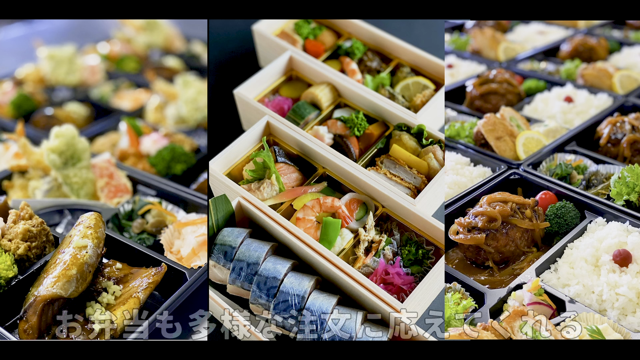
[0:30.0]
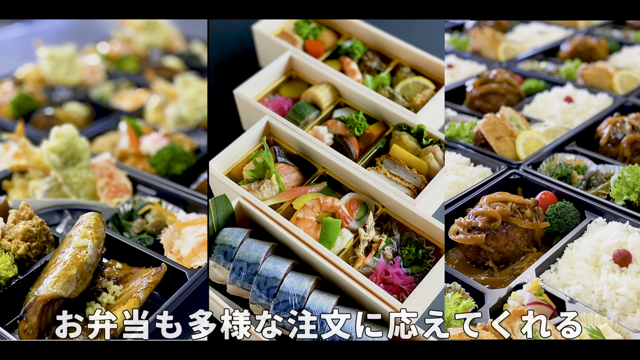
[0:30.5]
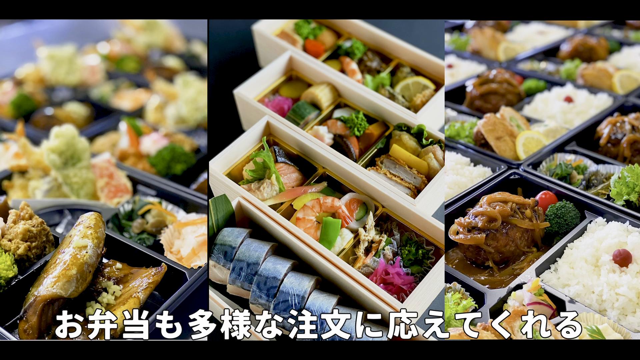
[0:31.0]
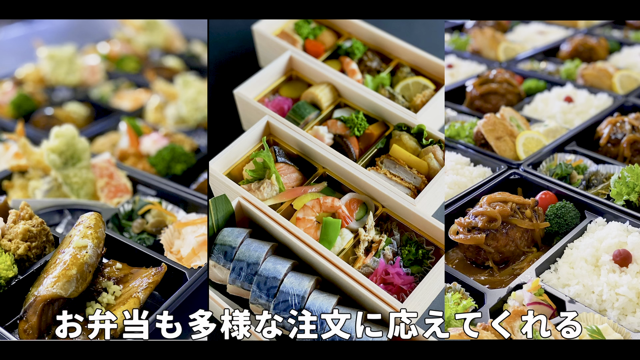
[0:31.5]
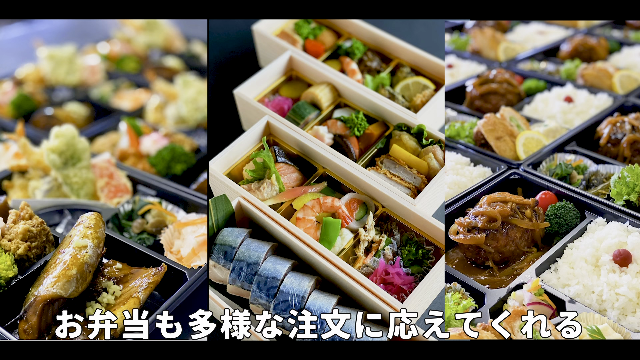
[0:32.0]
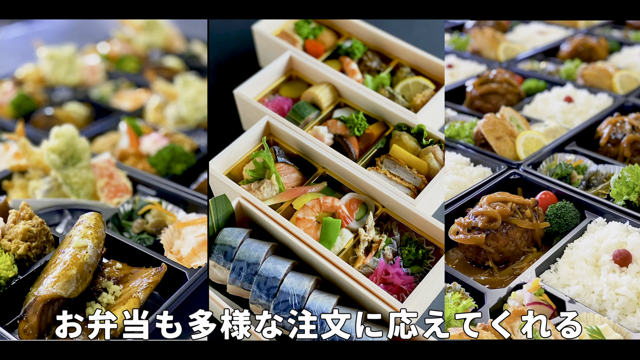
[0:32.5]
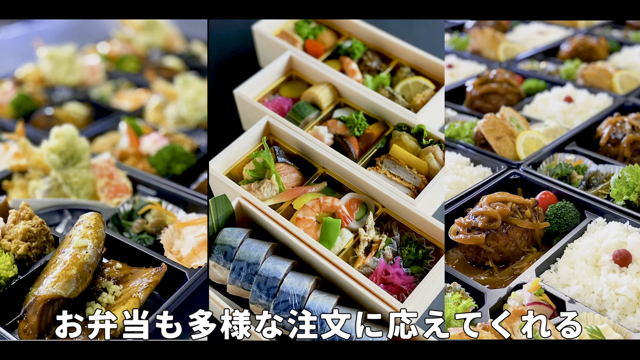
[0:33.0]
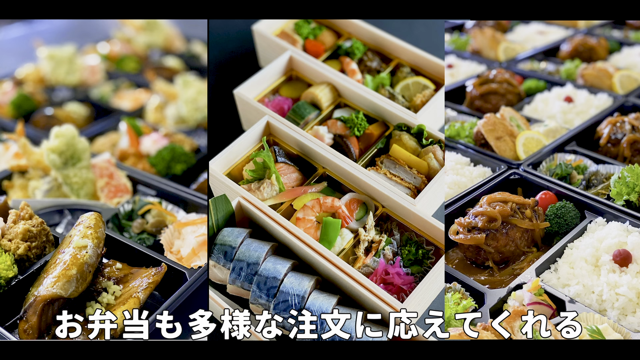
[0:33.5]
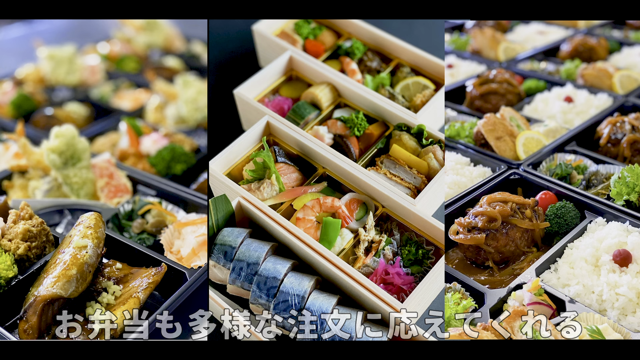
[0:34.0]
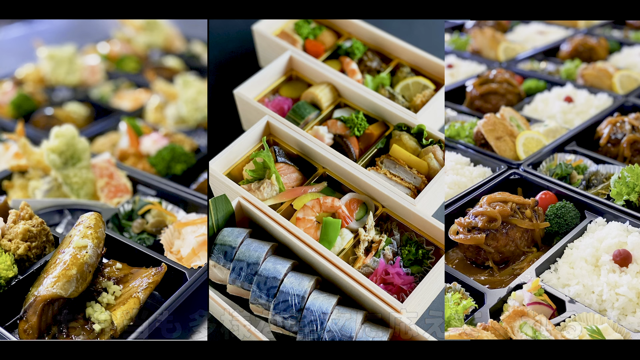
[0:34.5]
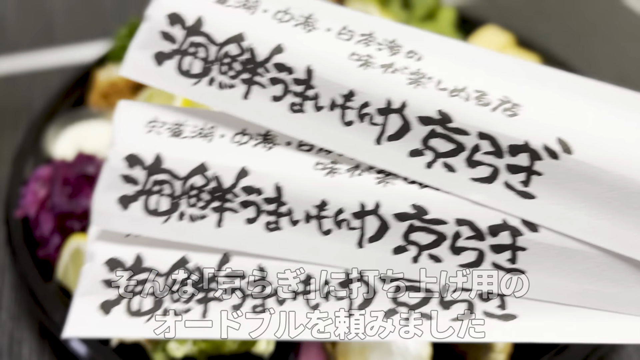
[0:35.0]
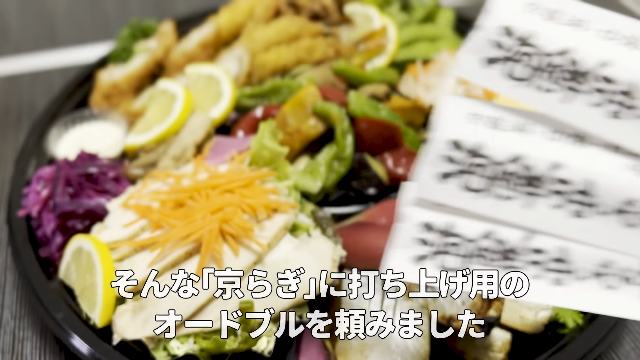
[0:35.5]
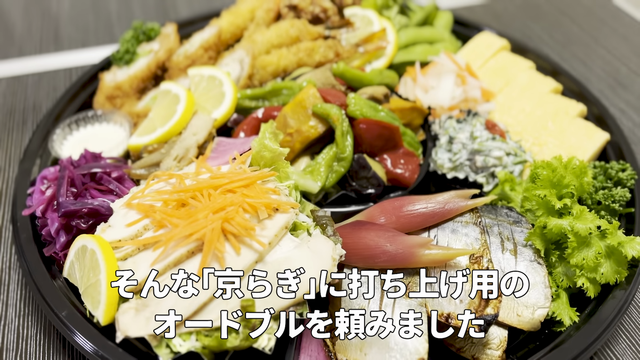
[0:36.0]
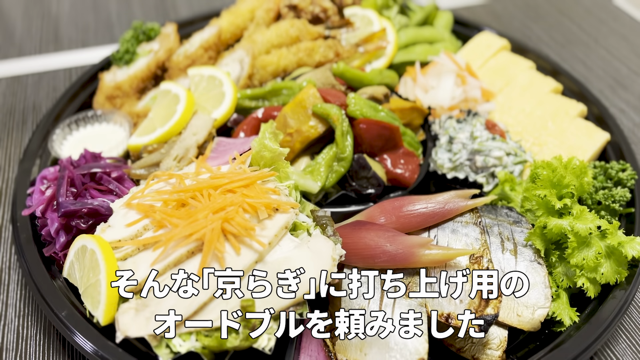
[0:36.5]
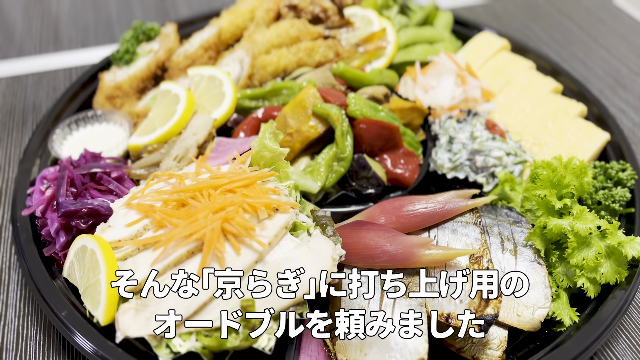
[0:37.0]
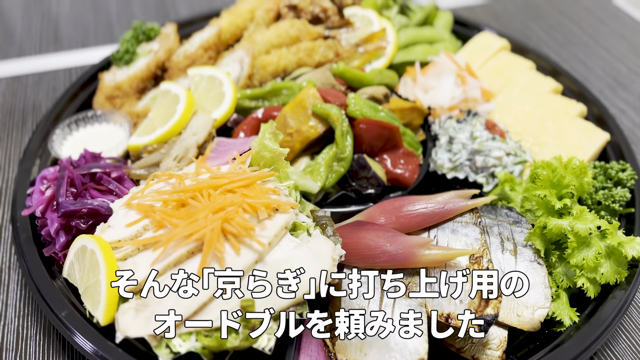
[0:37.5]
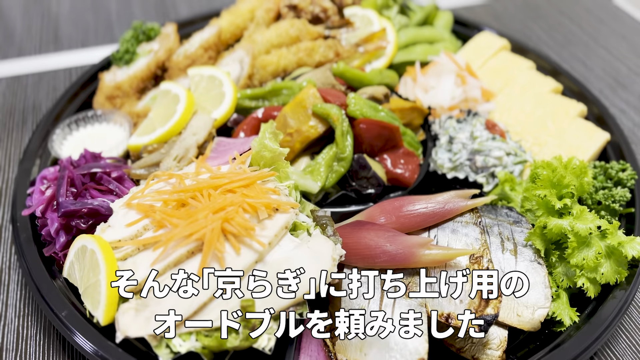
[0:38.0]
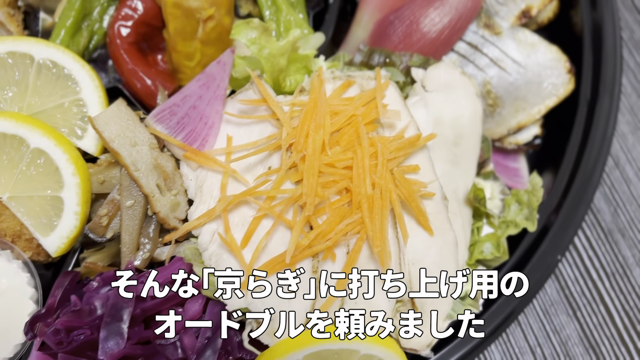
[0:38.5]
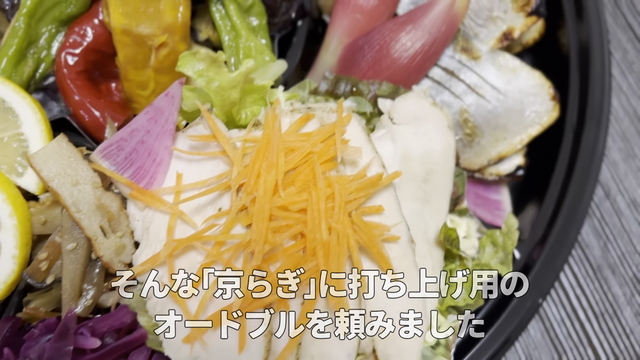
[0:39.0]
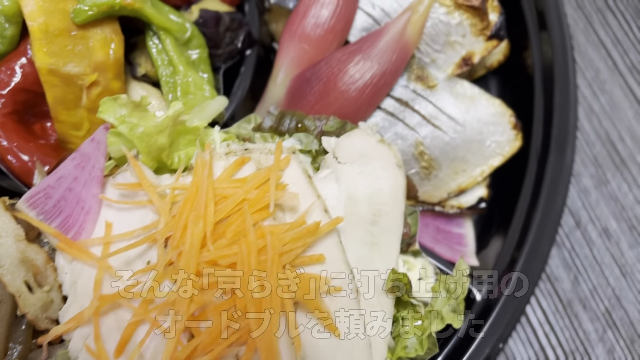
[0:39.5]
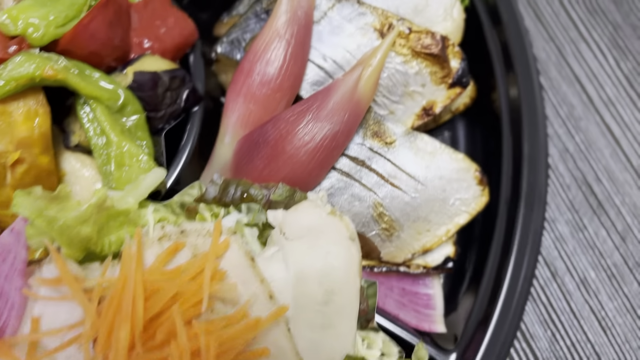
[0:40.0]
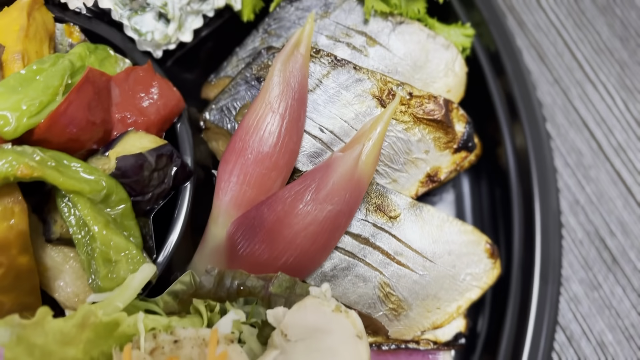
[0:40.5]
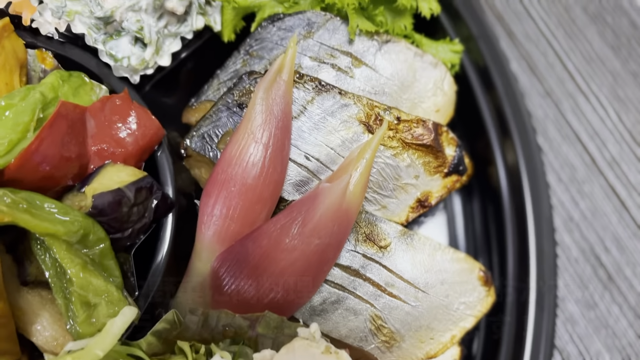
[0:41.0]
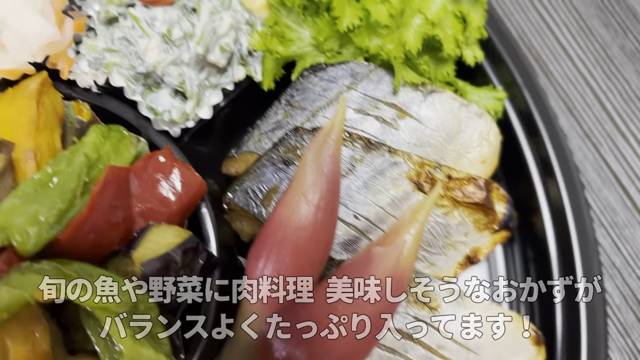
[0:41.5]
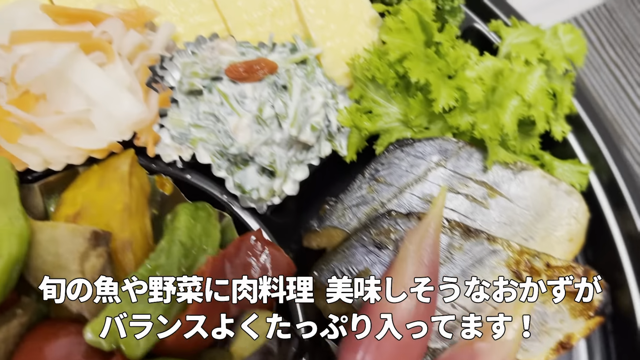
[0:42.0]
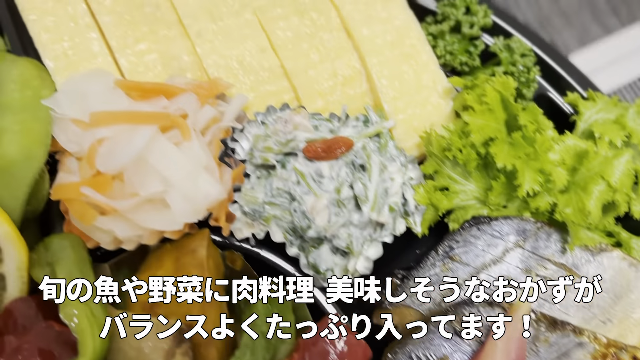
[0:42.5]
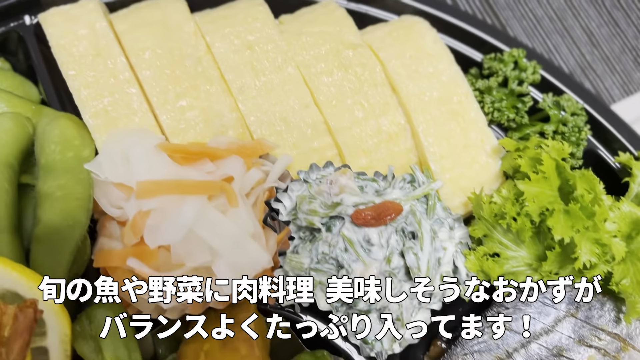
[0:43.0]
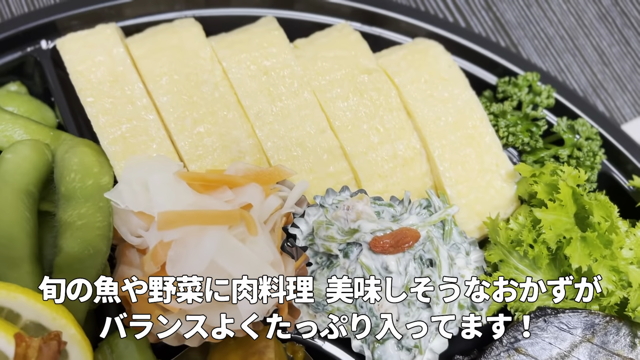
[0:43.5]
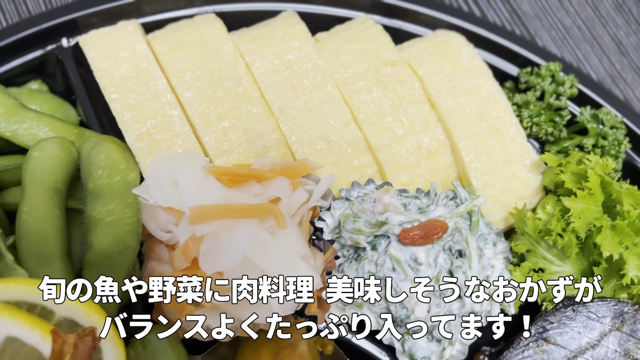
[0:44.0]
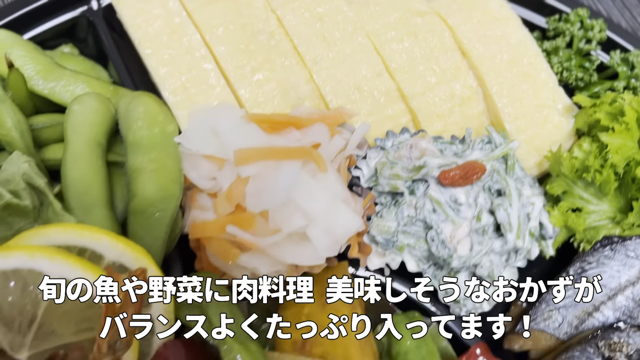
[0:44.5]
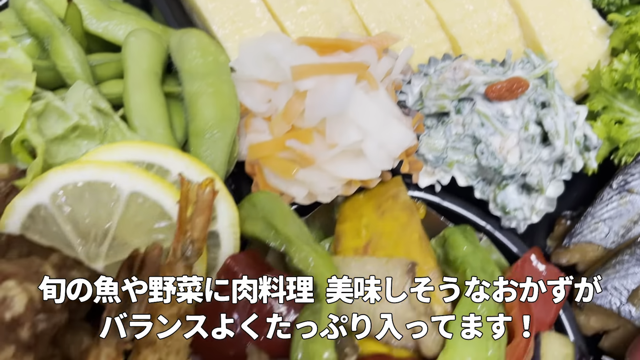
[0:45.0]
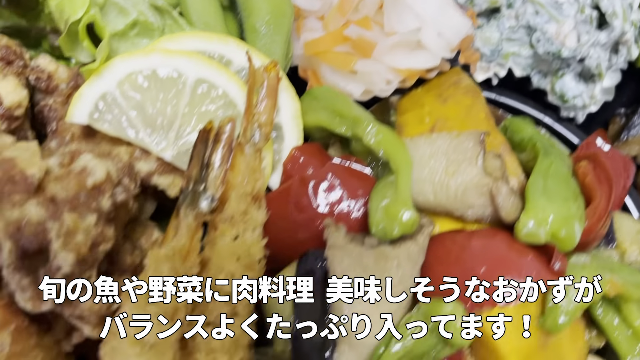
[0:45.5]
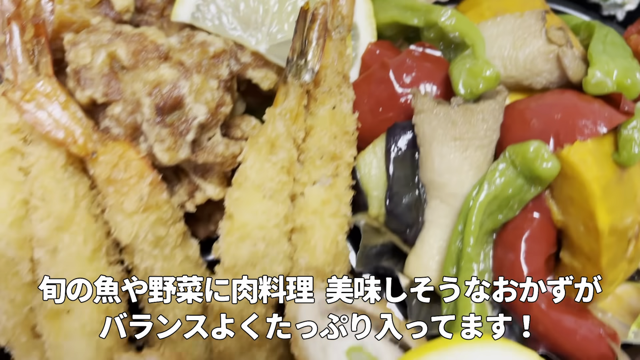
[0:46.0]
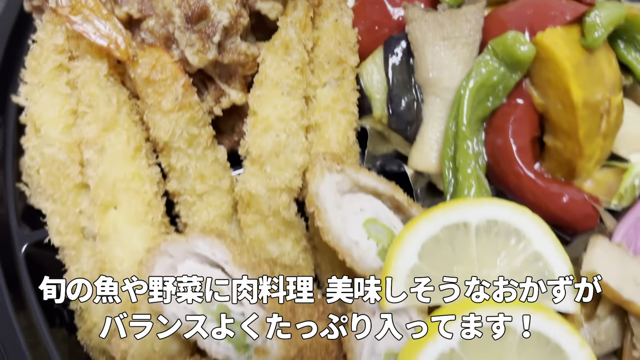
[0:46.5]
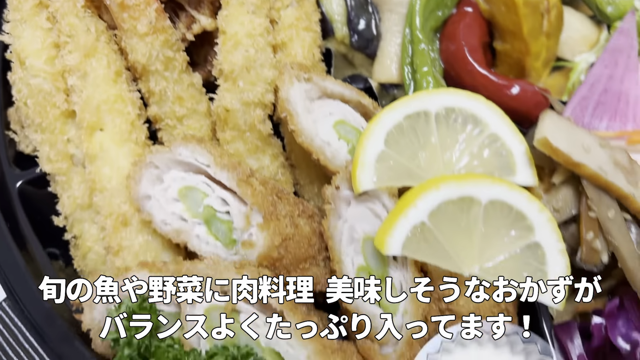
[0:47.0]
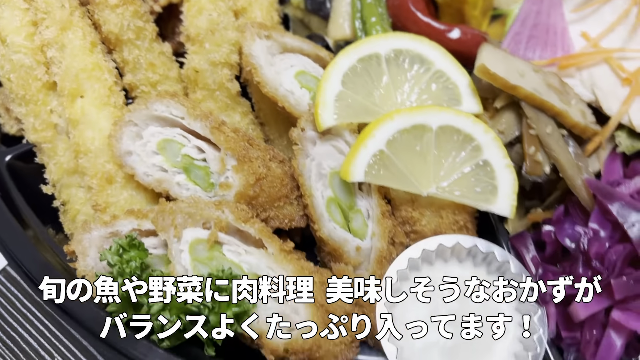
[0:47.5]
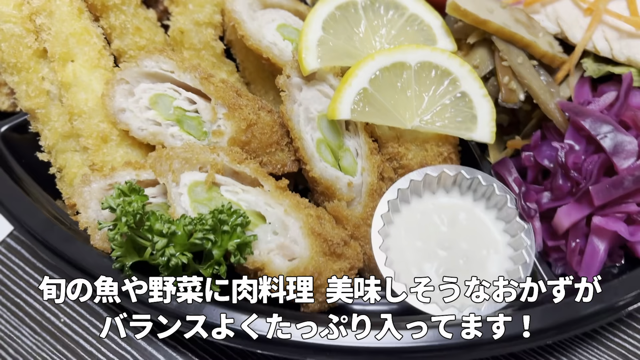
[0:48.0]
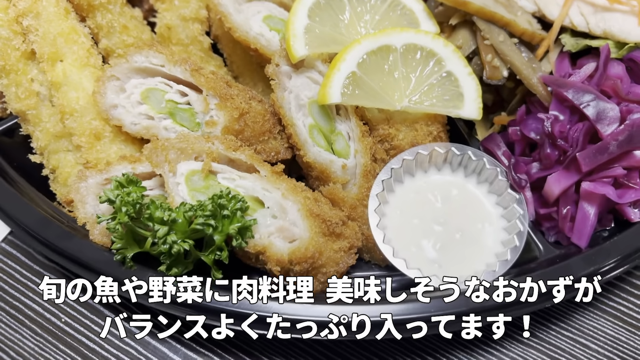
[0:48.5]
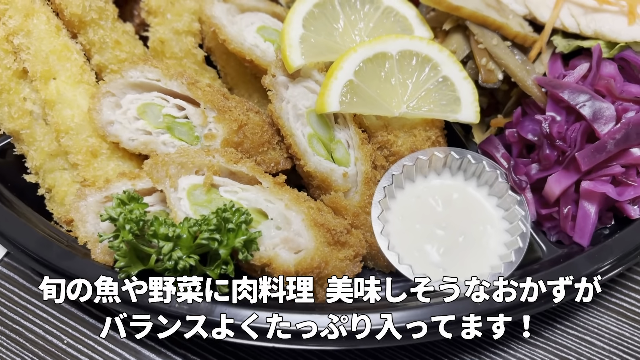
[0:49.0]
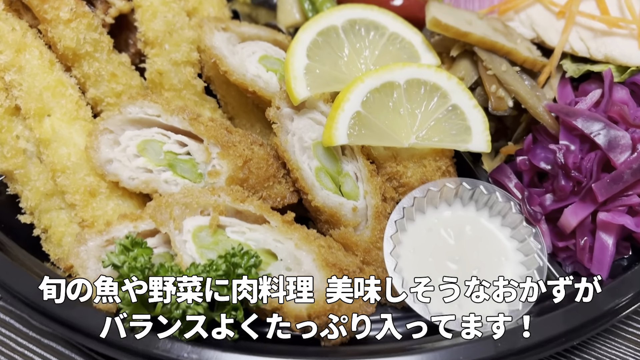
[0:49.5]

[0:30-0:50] Various dishes fill the screen, including what may be sushi, along with shrimp, lemon slices, various vegetables, meat and rice. The video cuts to three pieces of paper with Japanese or Chinese text on them and then slowly reveals a dish full of different foods: radish, cut carrots, what looks like mashed potatoes, fried shrimp and lemon slices. The camera slowly zooms in on this one dish, showing the various foods the camera person is probably about to eat. Two lemon slices are garnished on top of the dish.